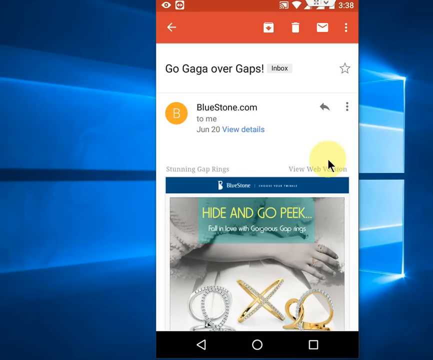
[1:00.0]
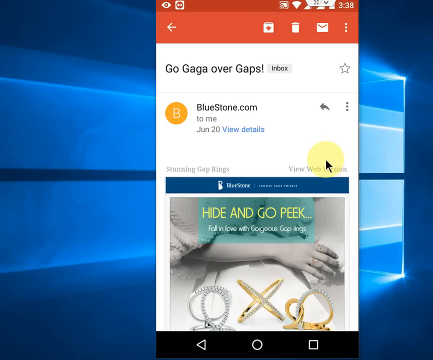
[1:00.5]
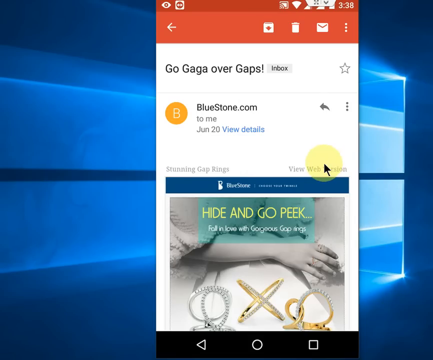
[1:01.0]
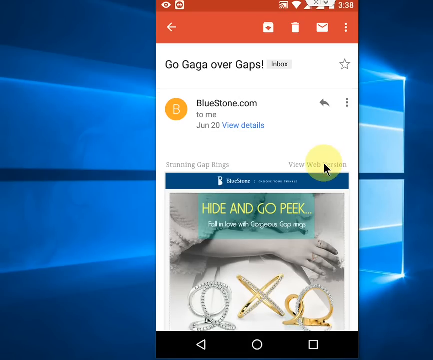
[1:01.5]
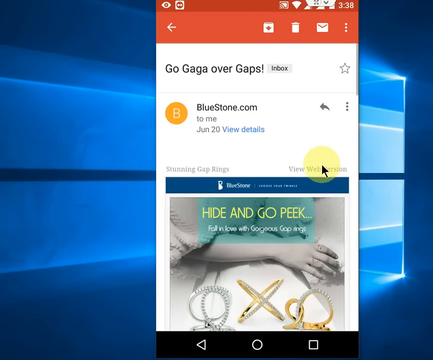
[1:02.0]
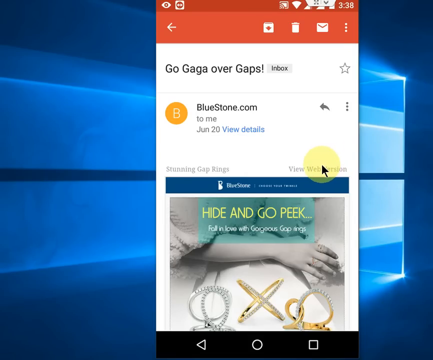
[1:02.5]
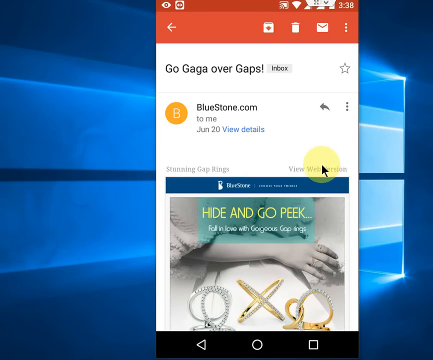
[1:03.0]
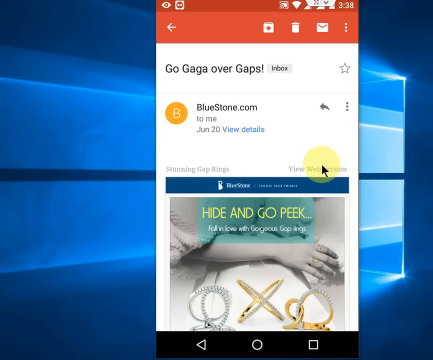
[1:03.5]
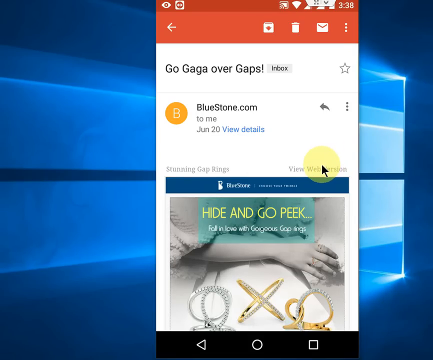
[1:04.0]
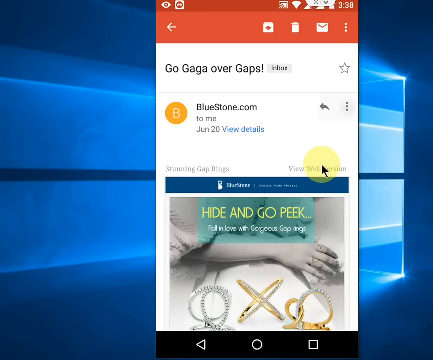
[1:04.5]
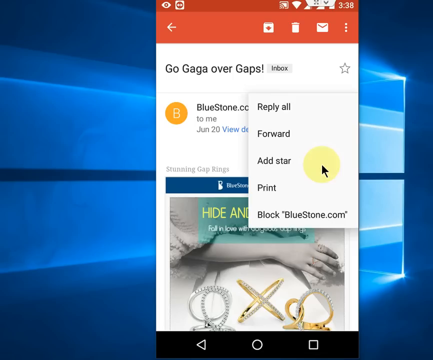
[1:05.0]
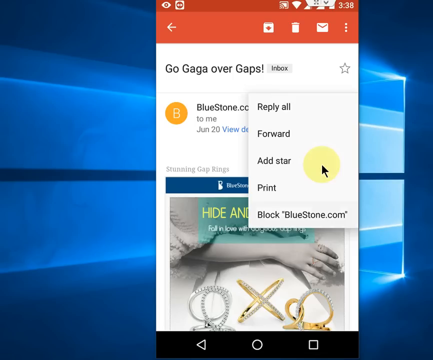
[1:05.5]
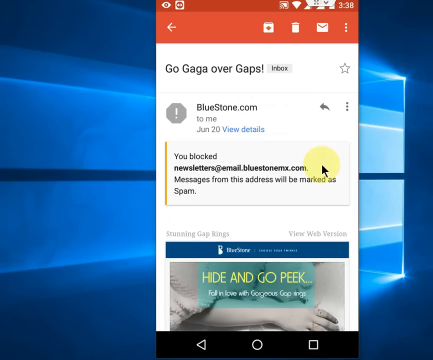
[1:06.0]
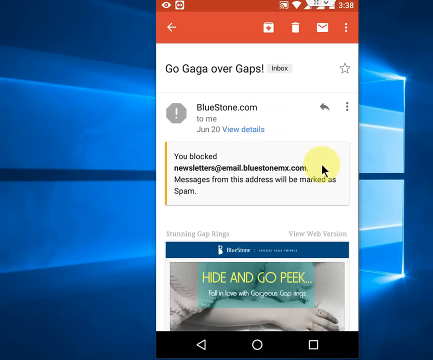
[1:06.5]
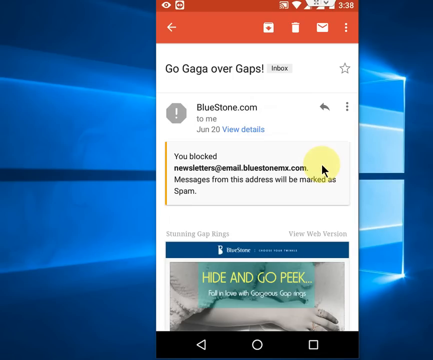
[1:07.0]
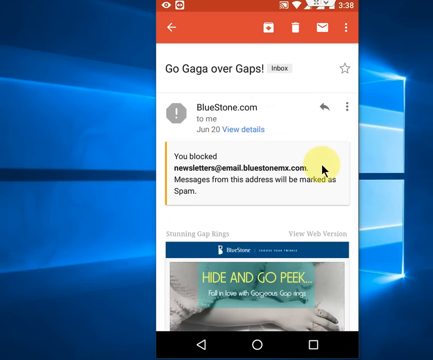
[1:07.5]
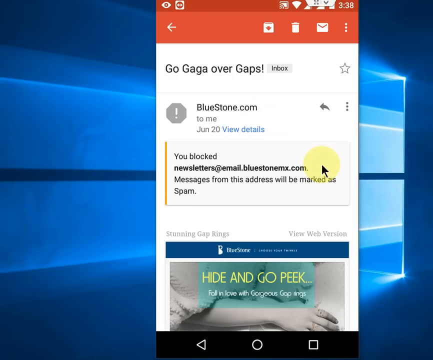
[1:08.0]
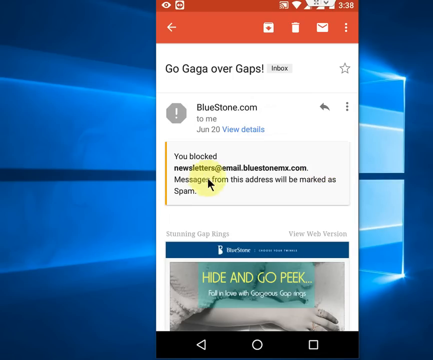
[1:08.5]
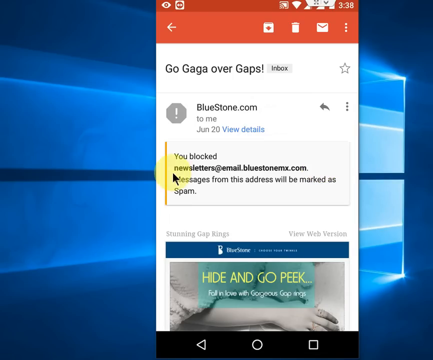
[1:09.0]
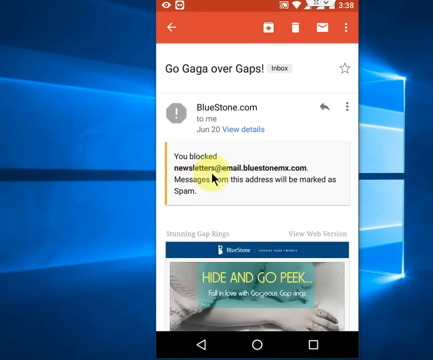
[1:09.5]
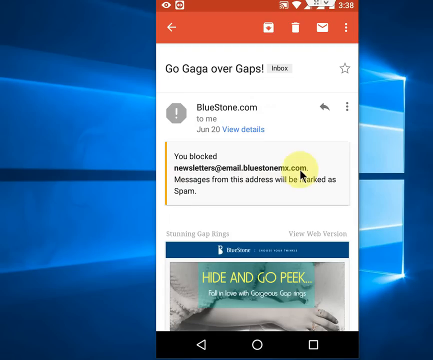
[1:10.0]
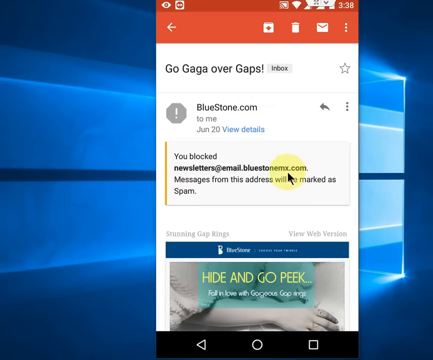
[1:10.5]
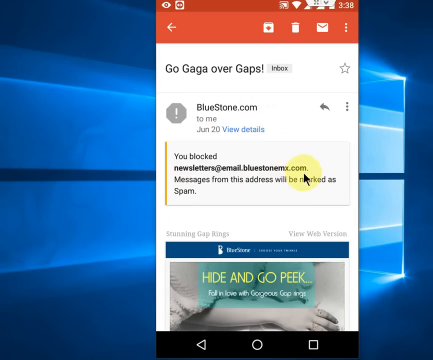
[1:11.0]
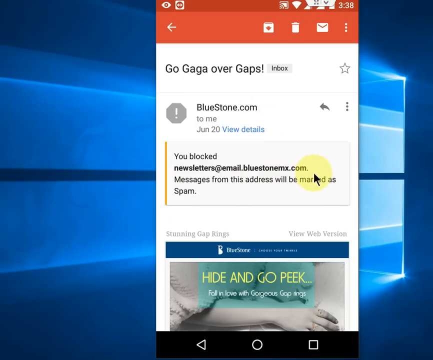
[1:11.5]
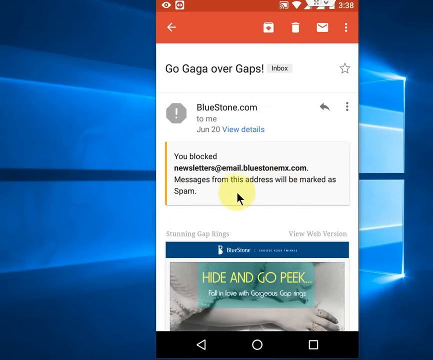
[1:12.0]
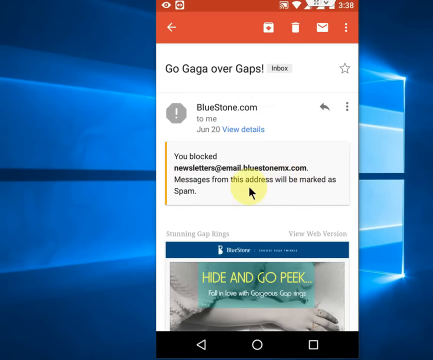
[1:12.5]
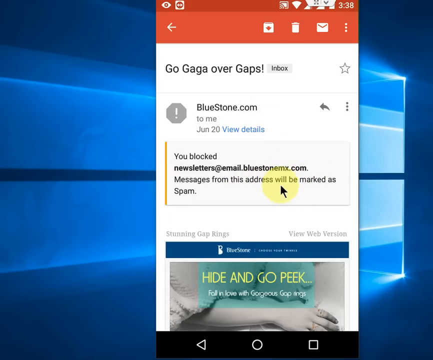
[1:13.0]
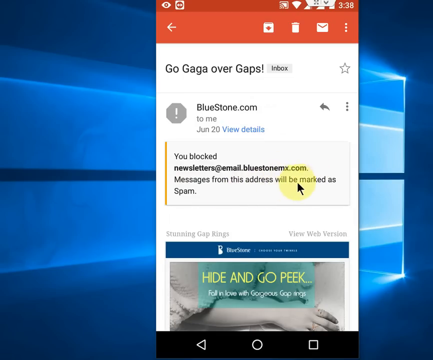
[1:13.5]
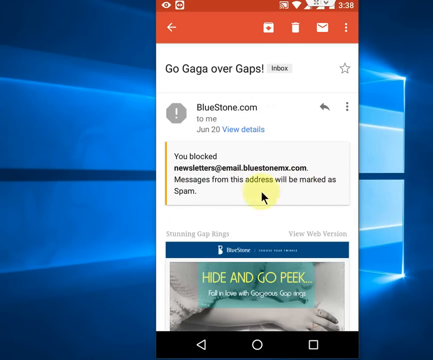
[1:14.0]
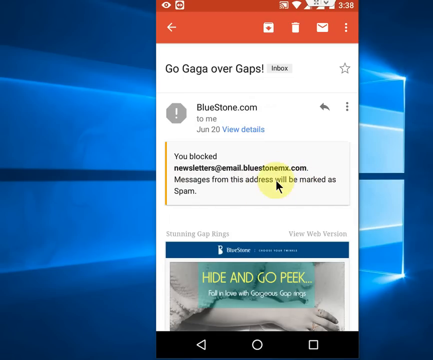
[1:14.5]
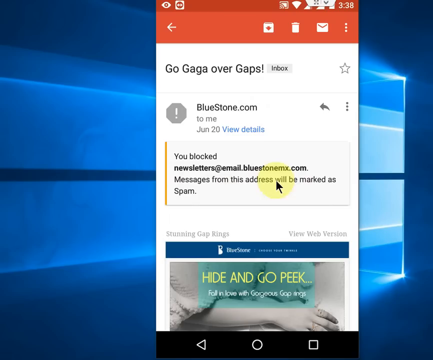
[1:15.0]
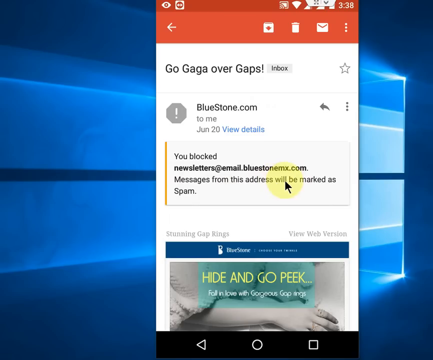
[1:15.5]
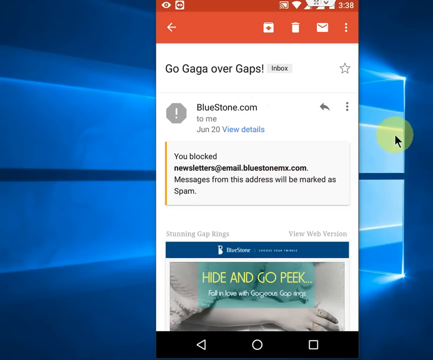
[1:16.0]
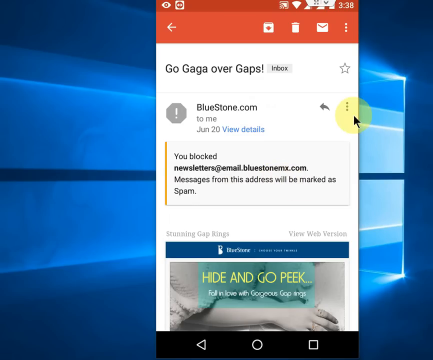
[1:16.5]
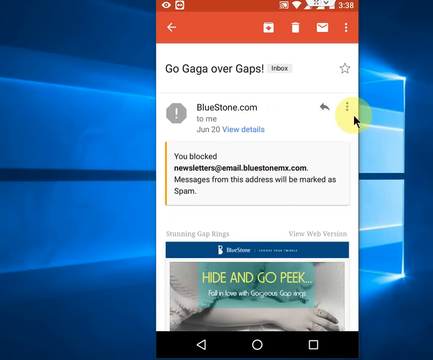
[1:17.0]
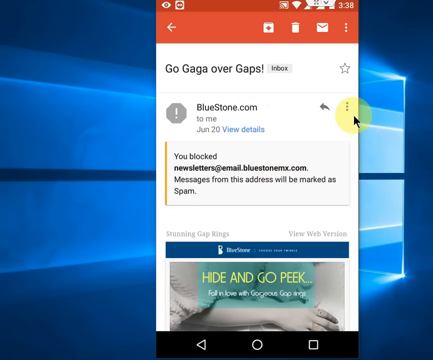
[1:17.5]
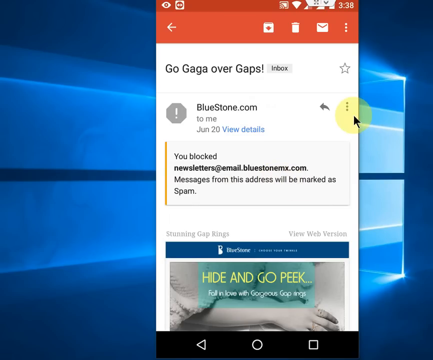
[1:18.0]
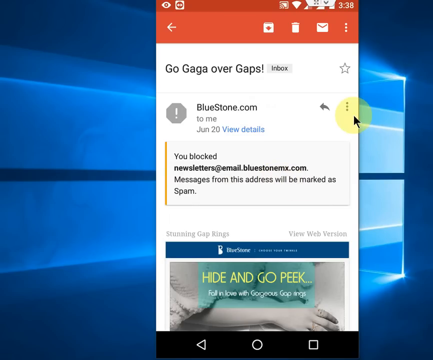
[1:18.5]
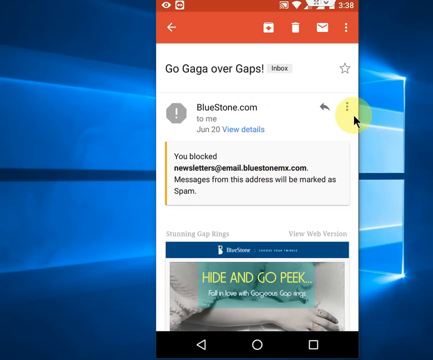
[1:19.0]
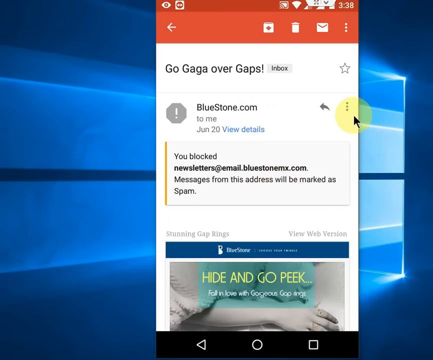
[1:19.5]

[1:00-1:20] The user scrolls on the same "Go Gaga over gaps" inbox screen in black text. The orange circle with a B inside appears for bluestone.com, with "to me, June 20th", and "View details" appears in blue. At the bottom, "Hide and Go Peek" is in yellow inside a green rectangle, with white text reading "Fall in love with gorgeous gap rings". Under the woman's arms are a silver necklace on the left, a silver and gold bracelet in the middle, and a silver and gold bracelet on the right. The user moves the yellow cursor, and text reads "You blocked newsletters at email bluestone.com. Messages and addresses marked as spam."